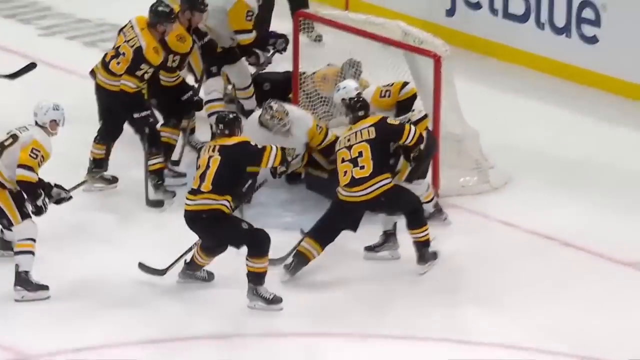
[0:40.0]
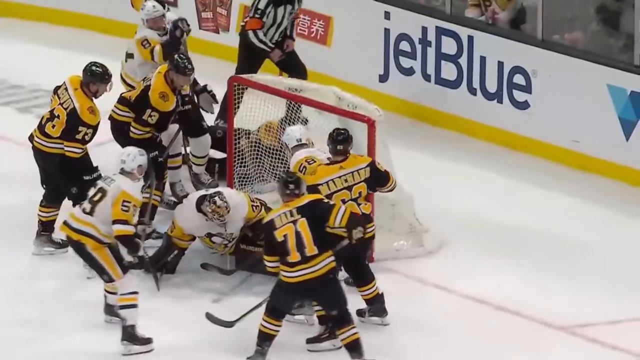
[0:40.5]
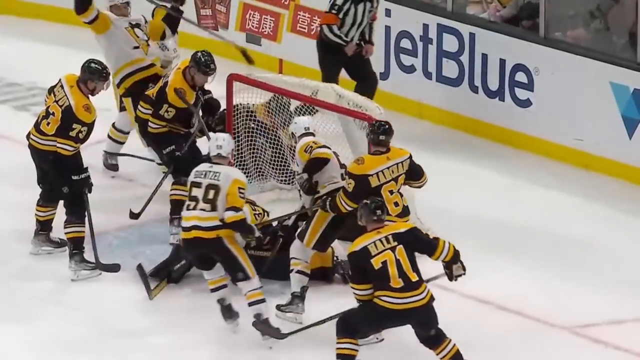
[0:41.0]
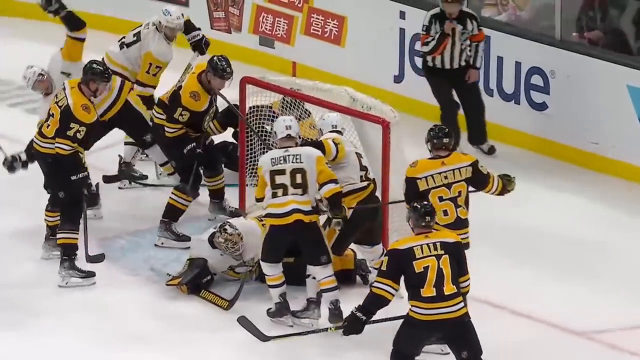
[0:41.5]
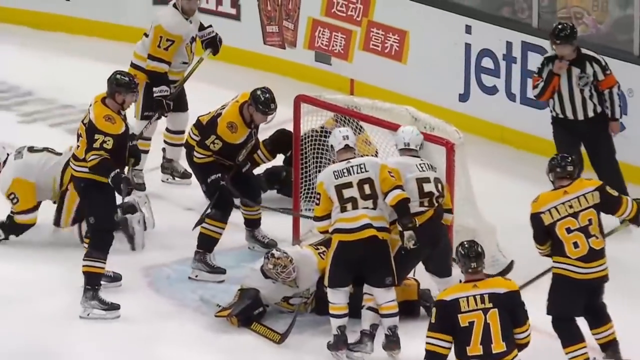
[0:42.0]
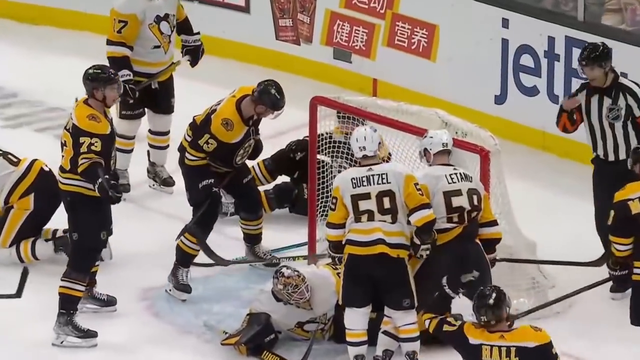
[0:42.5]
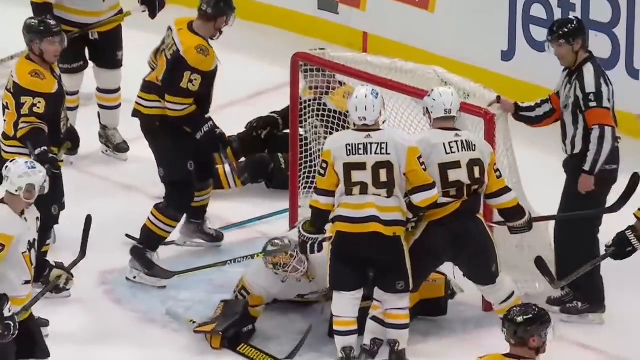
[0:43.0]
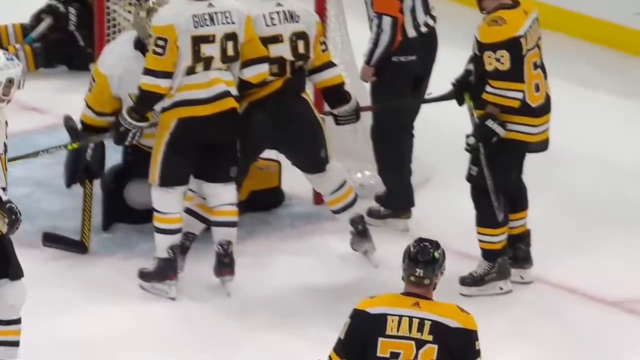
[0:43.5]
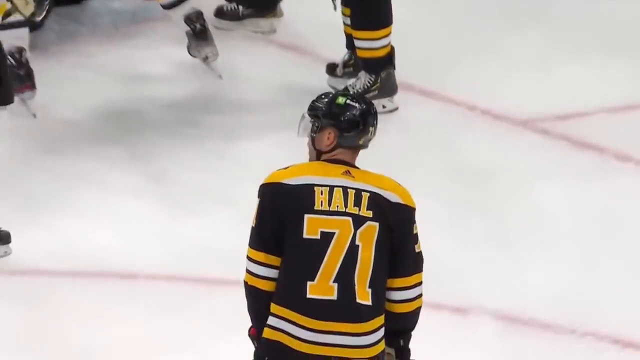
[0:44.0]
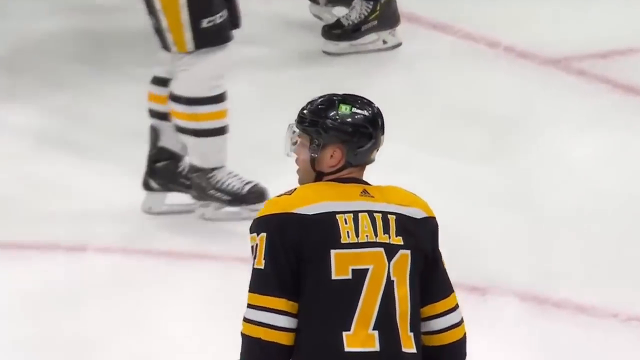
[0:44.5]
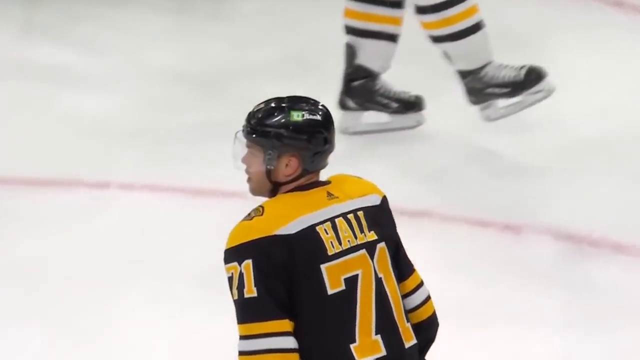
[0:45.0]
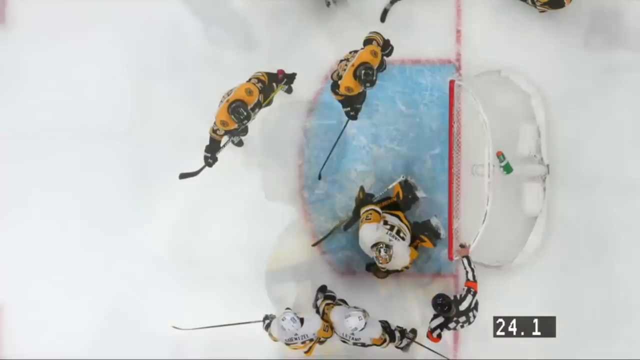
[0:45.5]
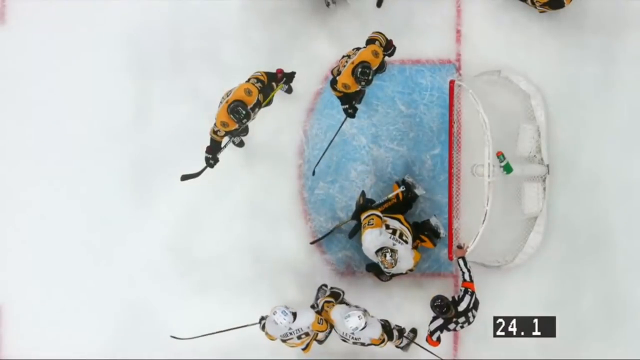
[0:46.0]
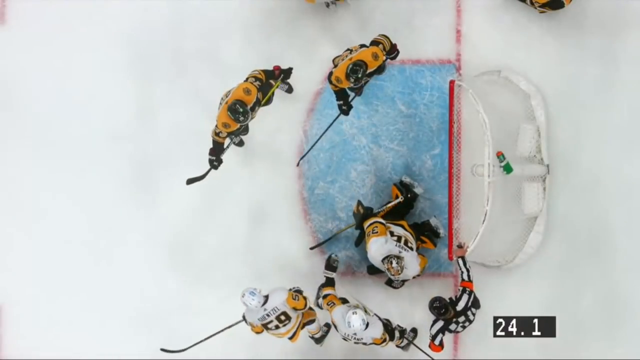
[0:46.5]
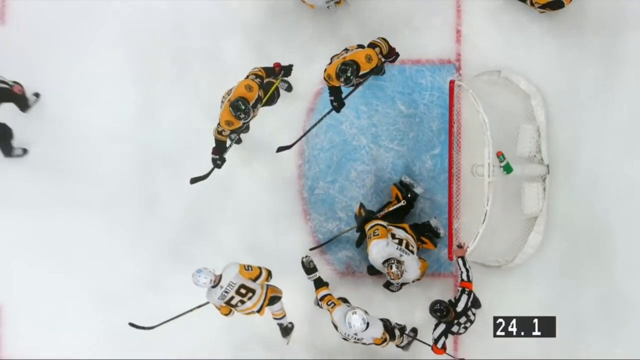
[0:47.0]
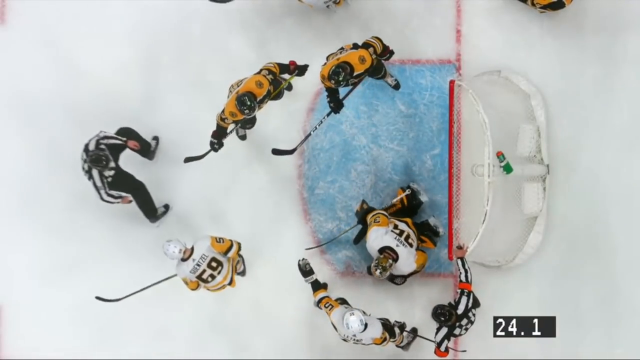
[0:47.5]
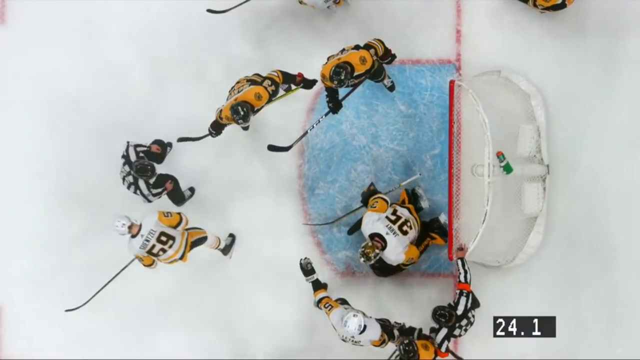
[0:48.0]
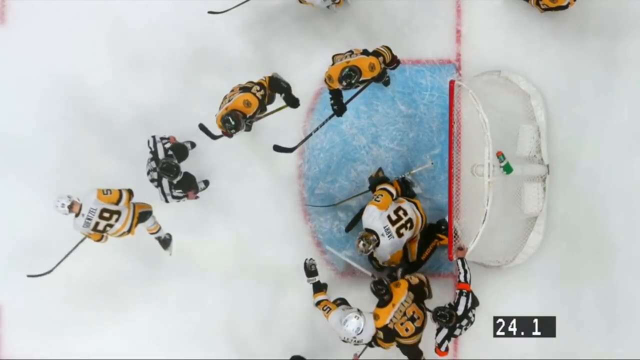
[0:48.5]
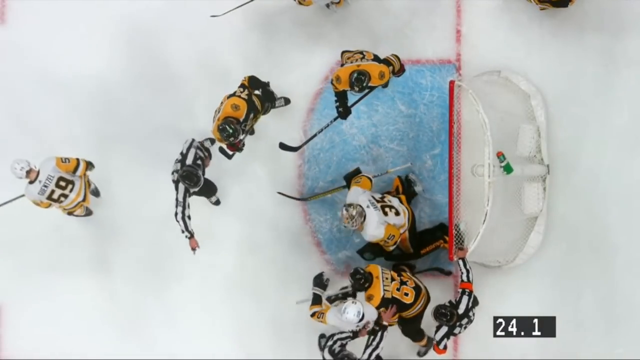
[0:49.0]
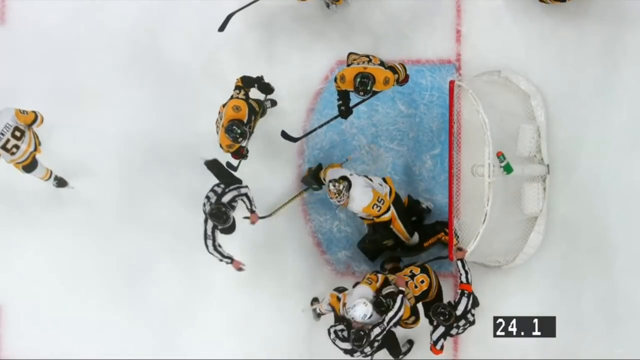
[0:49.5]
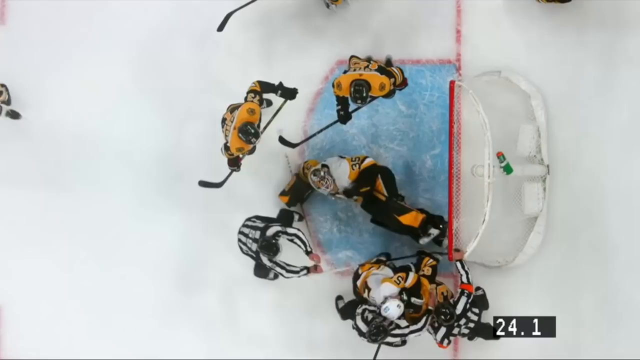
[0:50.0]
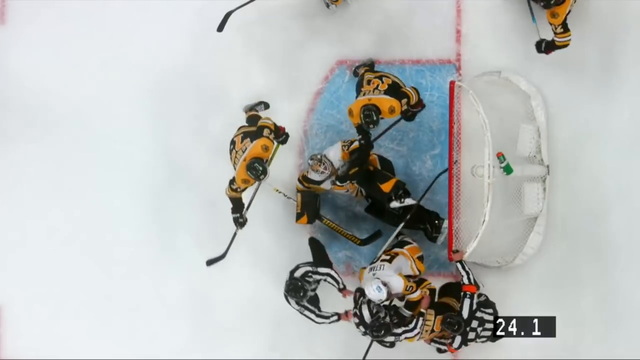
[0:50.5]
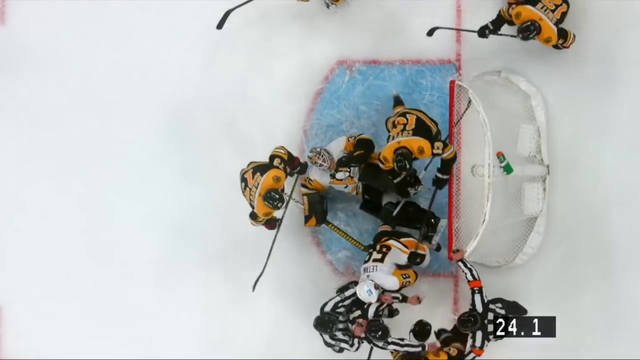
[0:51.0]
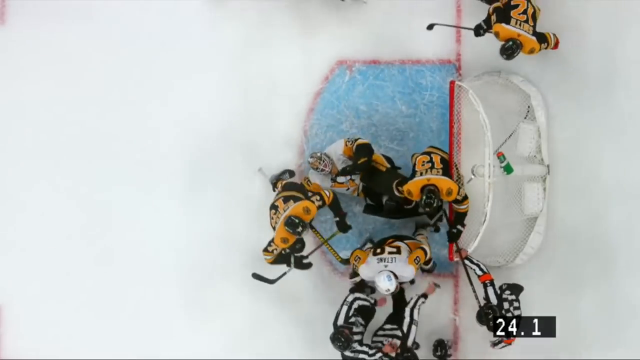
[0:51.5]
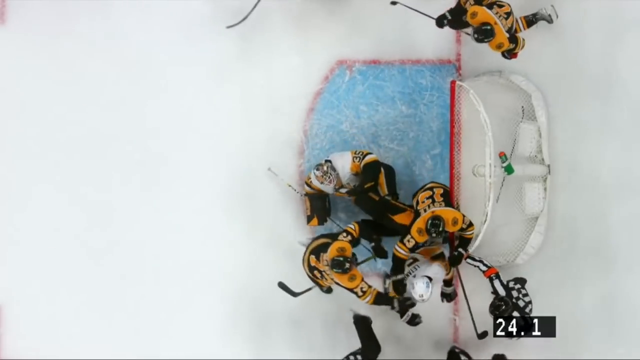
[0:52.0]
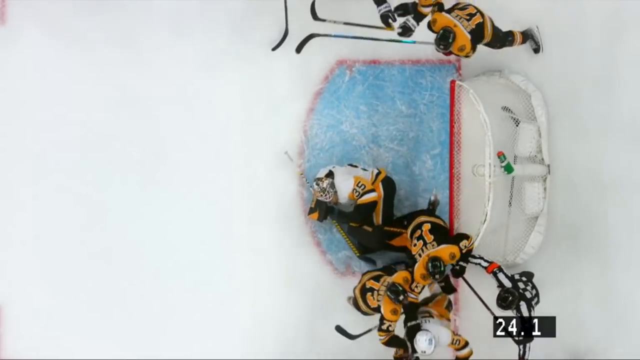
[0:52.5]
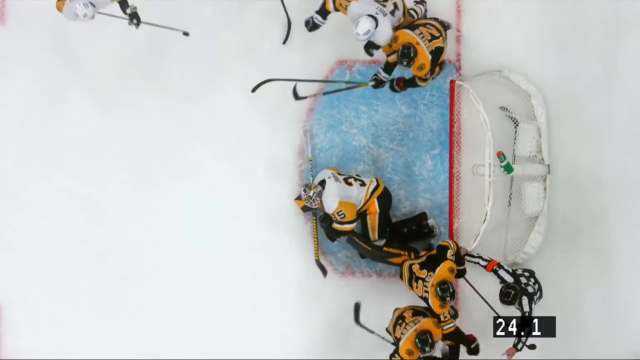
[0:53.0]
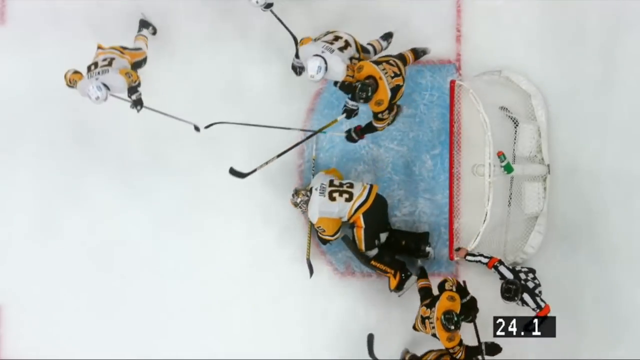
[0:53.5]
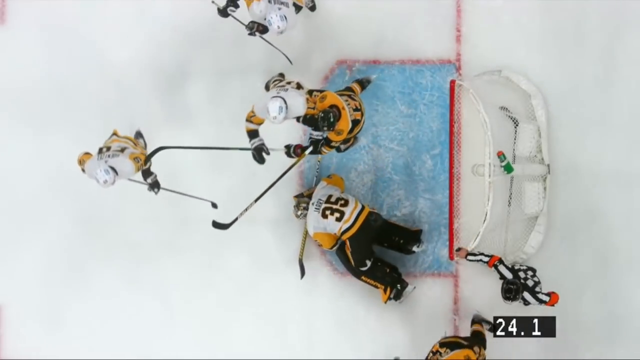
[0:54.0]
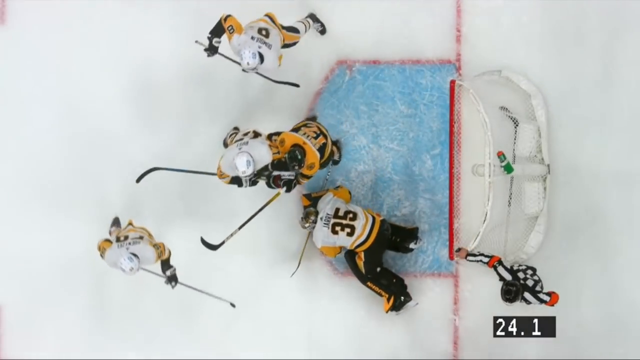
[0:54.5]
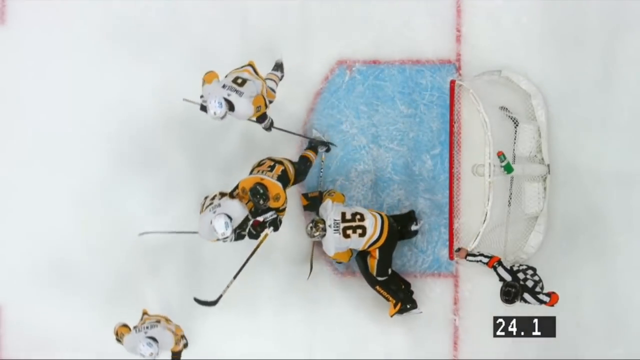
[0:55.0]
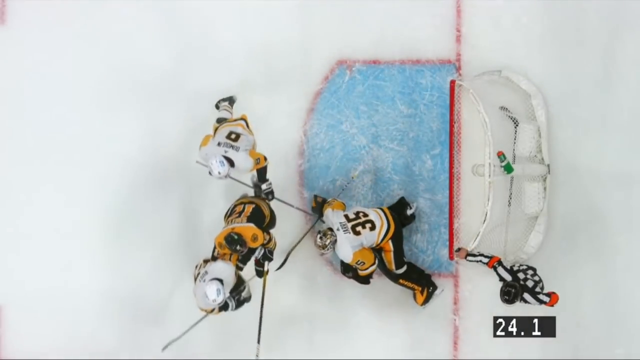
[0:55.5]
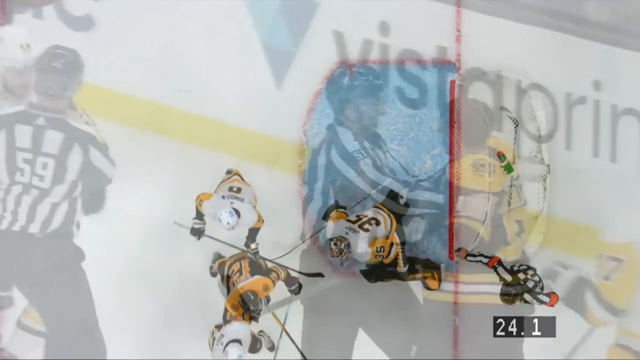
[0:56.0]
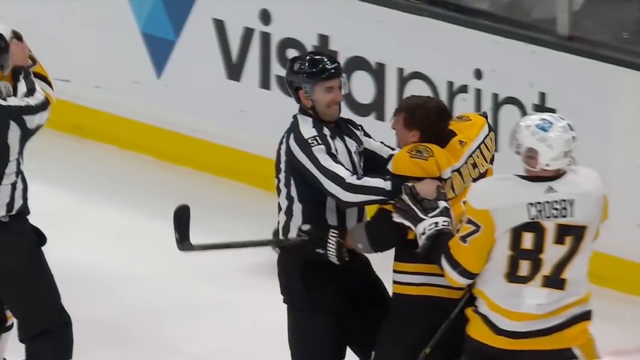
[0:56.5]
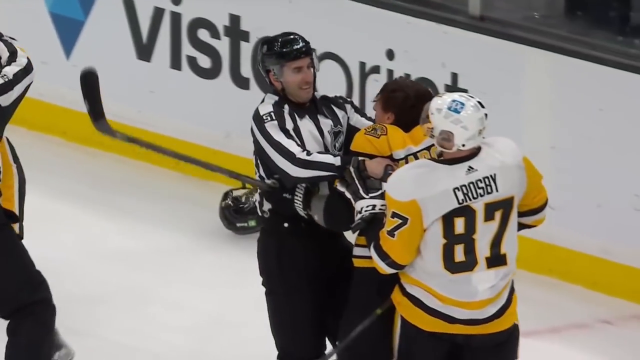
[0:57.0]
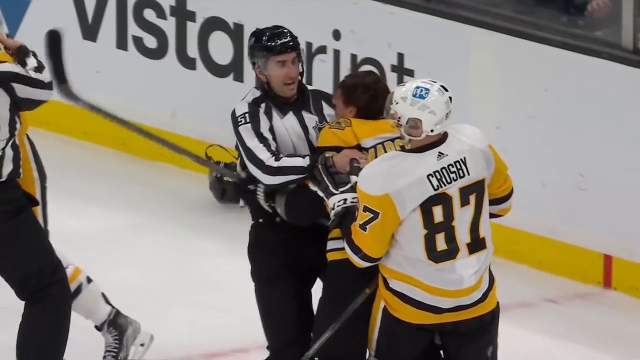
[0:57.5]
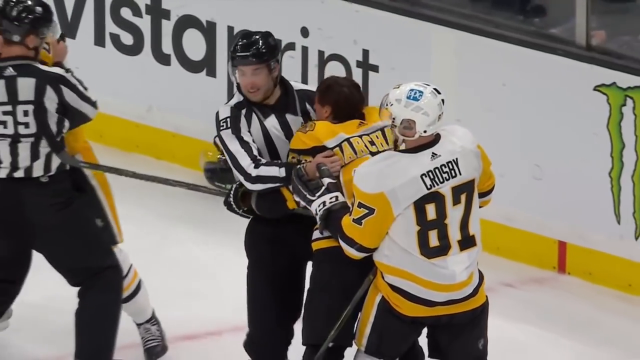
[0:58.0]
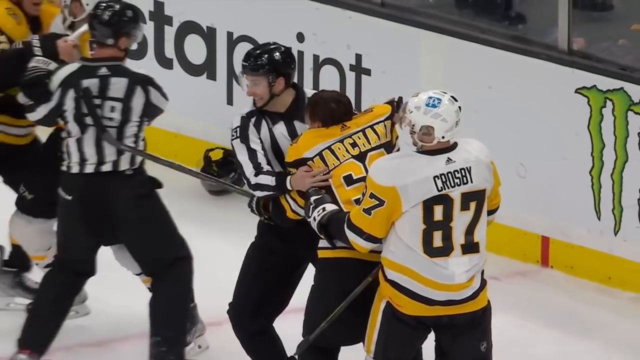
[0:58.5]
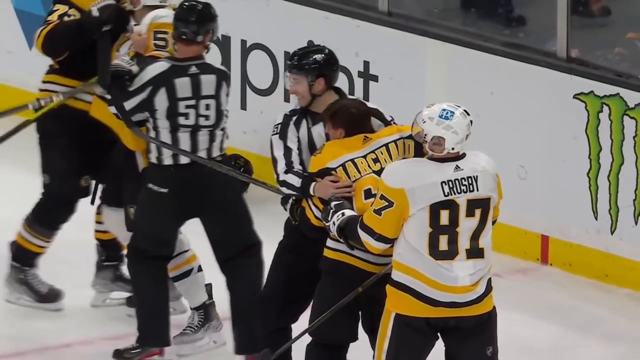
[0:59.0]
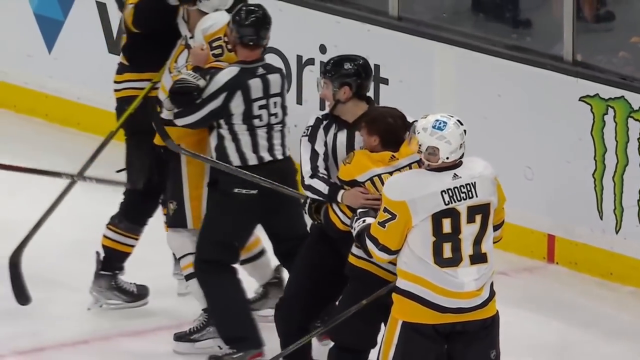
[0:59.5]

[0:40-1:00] A slow-motion replay of the action continues, now from an overhead shot. The goalkeeper is on the floor, one referee is holding back player Marchand, and another referee is holding back player number 58. Player number 63, at the bottom of the screen, appears to have struck the goalkeeper on the head, possibly what the players are arguing about. Player number 35 seems not to like that, despite wearing a helmet. A player called Hall is sort of standing at the side, apparently not knowing what is going on. A blue outline is on the ice where the goalkeeper would stand, and a yellow rim runs around the bottom of the advertising boards around the rink.